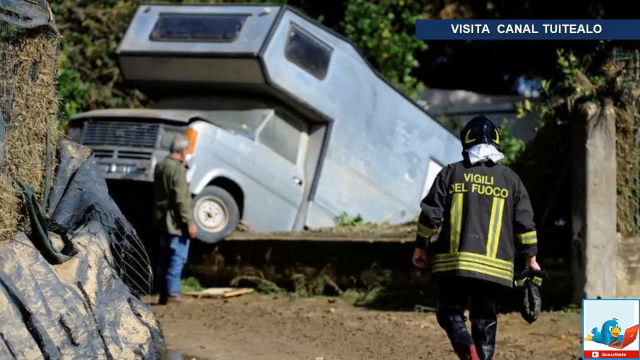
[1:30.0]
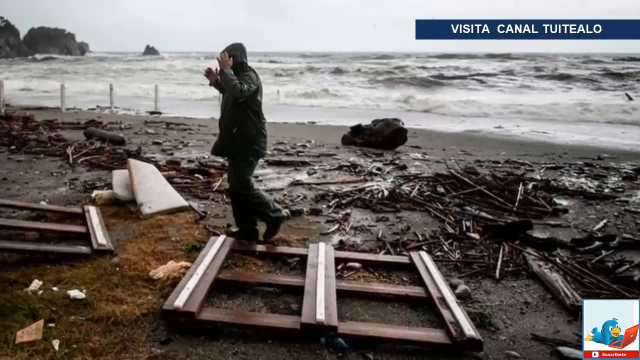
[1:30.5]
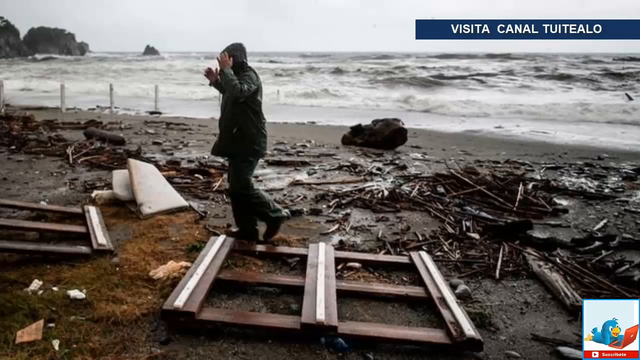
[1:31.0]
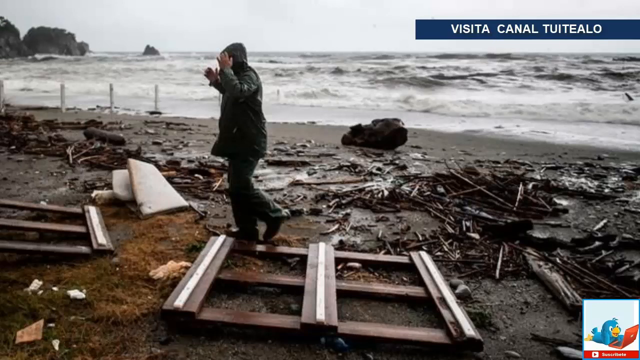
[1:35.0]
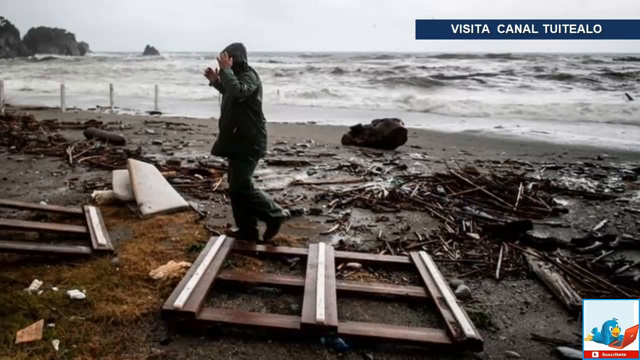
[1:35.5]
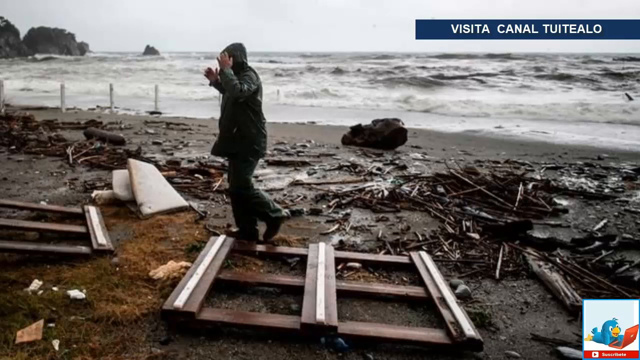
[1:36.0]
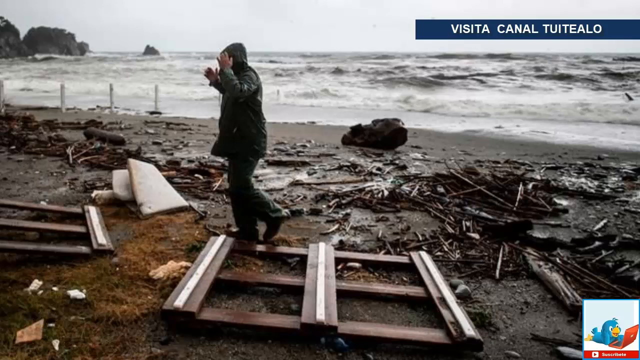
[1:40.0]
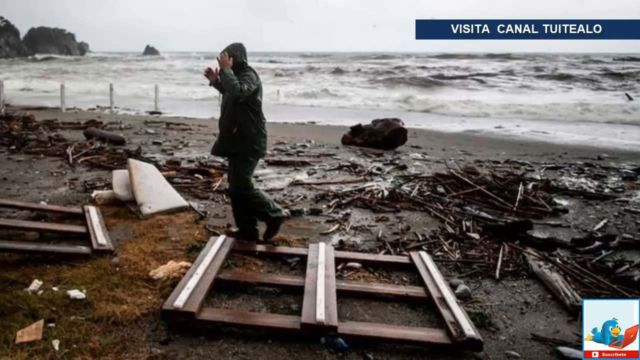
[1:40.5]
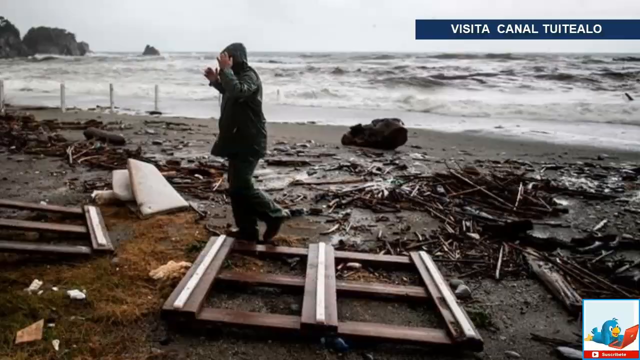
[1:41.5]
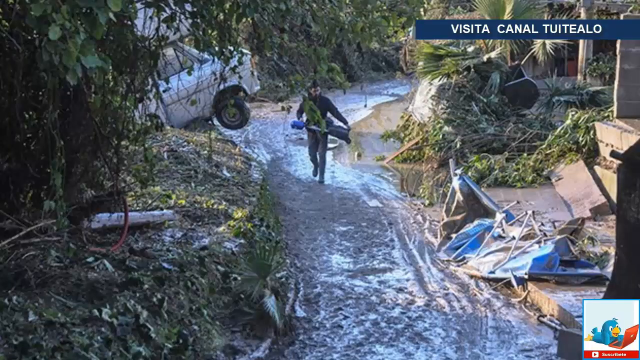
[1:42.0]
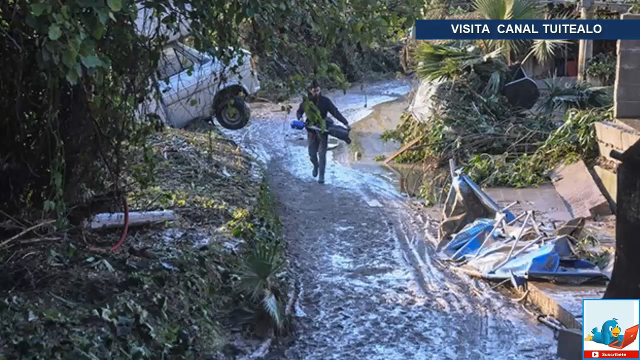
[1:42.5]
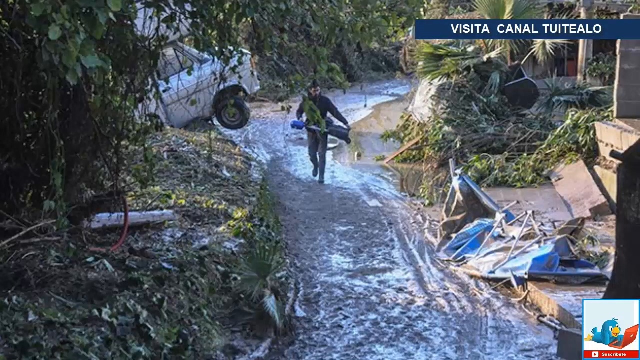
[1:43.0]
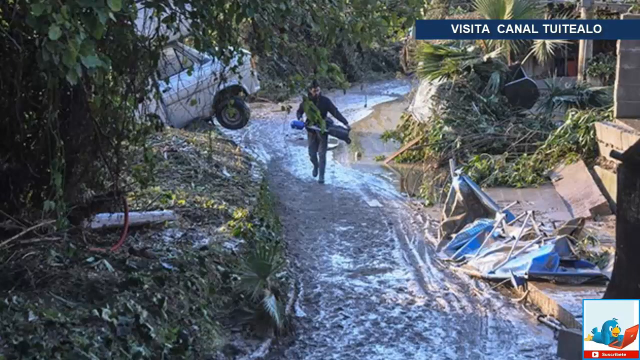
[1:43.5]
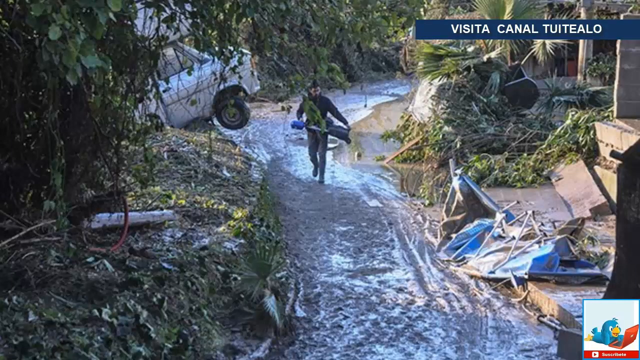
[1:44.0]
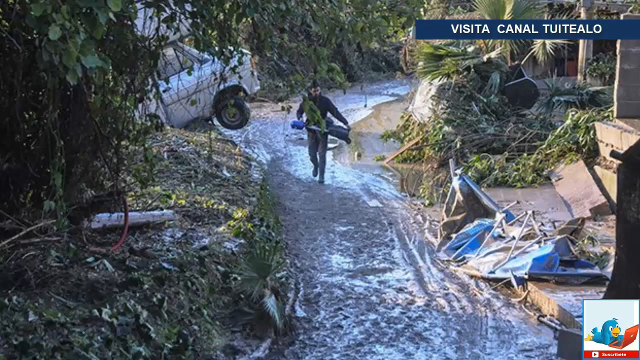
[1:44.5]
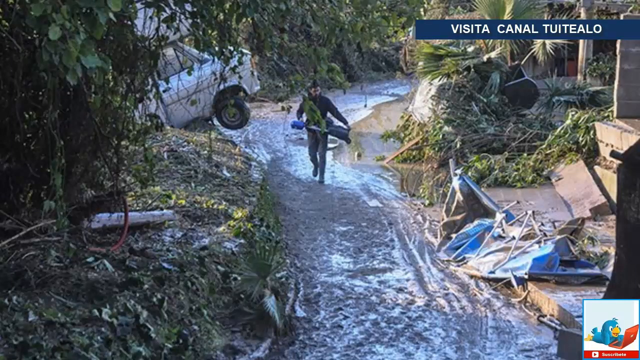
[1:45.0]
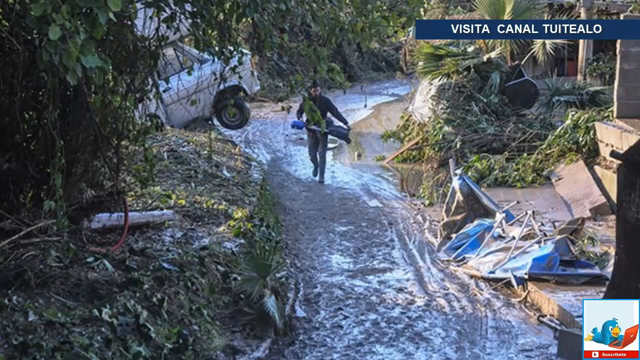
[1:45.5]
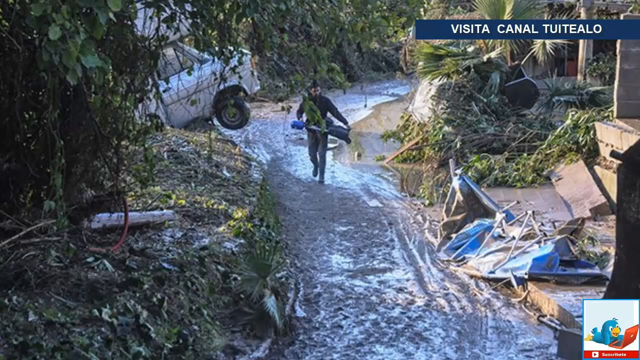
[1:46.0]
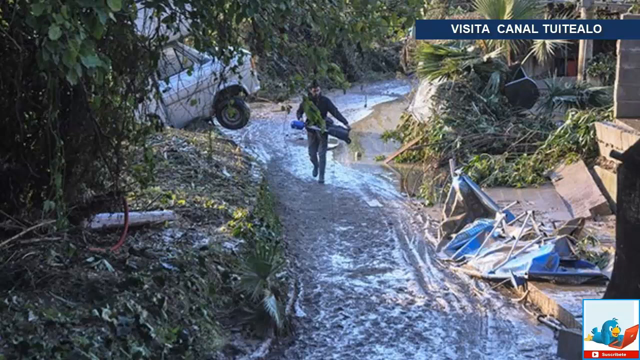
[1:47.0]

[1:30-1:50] An RV, or recreational vehicle, has been crashed by flooding. A man stands in front of it looking at it. The RV's front wheels are off the ground, and its rear end looks like it is possibly down in a ditch. A firefighter on the right side of the screen walks up to the scene. Next, rough seawater comes up onto the shore, and the buildings that were along the shore have been destroyed. A person walks through the debris on the beach next to the ocean water, surveying the damage. Then a person walks down a flooded street, with the RV in the background, its front wheels lifted off the ground. The person walks away from the crashed RV, which is over to the left, down a little alleyway or walkway. There is a lot of vegetation on either side of the walkway, and it looks damaged by the floodwaters. A blue tarp lies in the lower right.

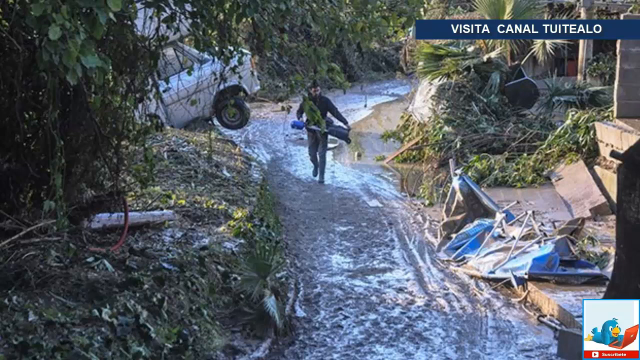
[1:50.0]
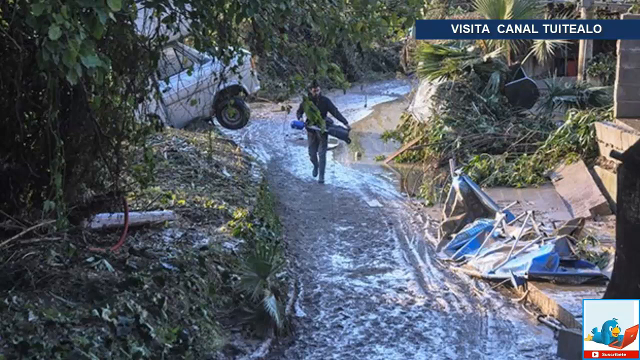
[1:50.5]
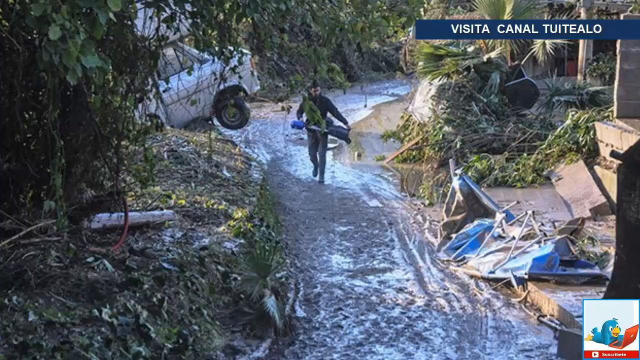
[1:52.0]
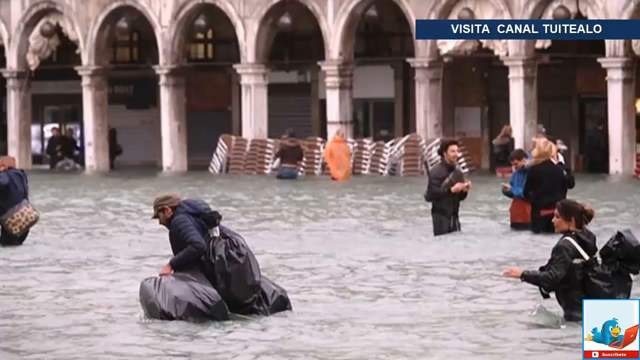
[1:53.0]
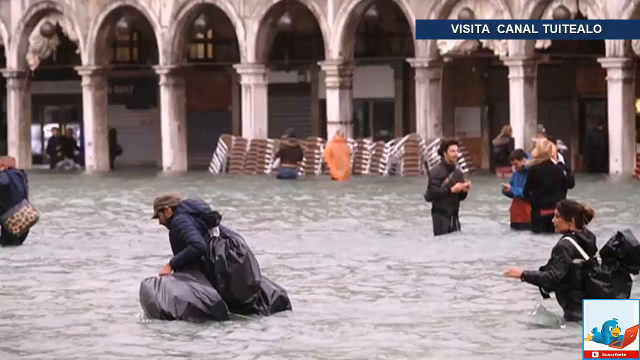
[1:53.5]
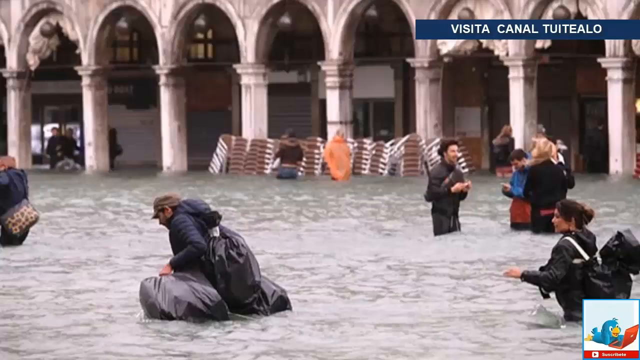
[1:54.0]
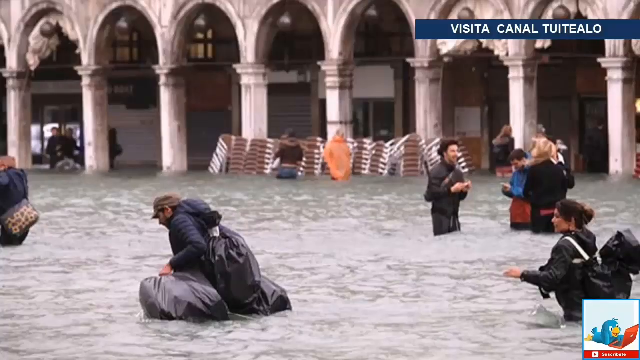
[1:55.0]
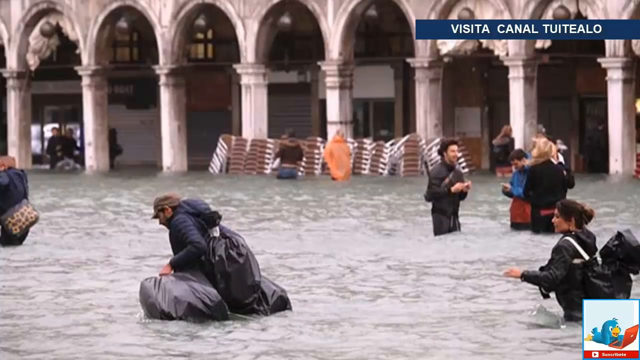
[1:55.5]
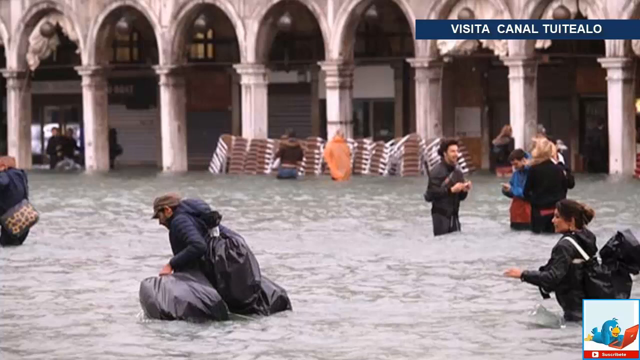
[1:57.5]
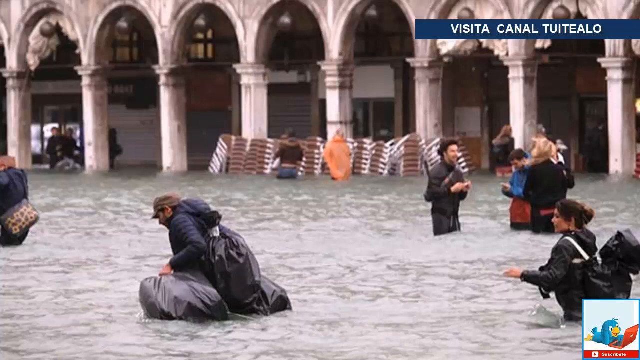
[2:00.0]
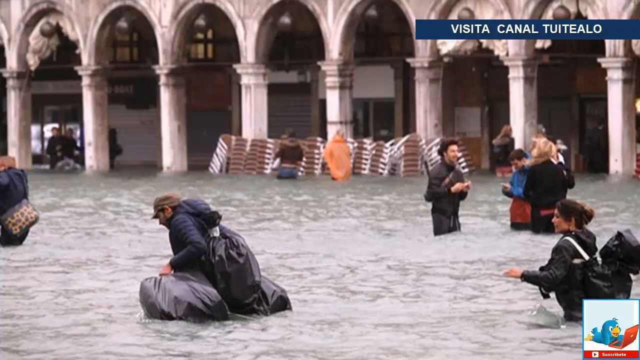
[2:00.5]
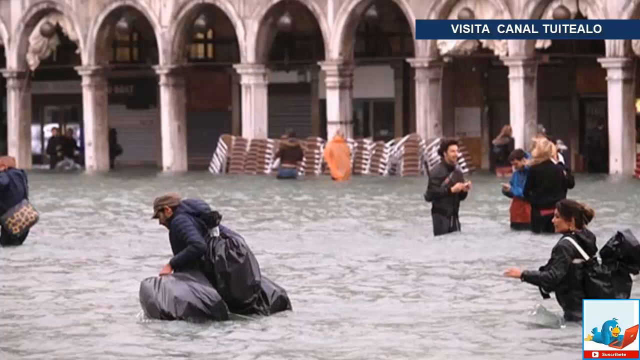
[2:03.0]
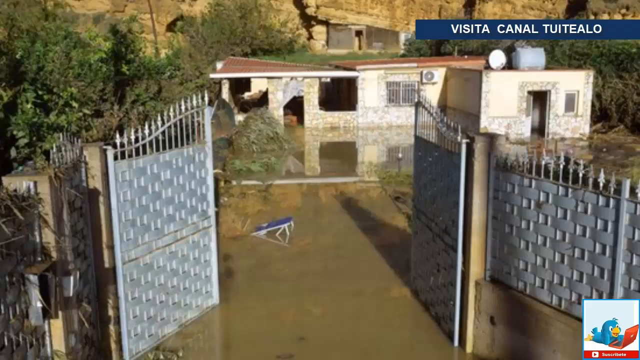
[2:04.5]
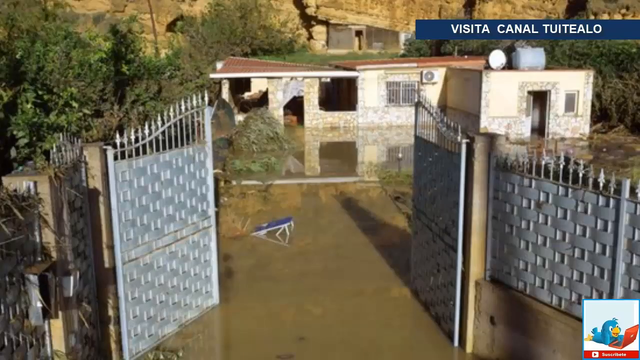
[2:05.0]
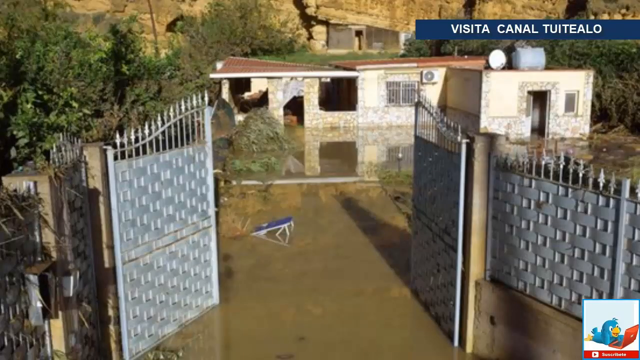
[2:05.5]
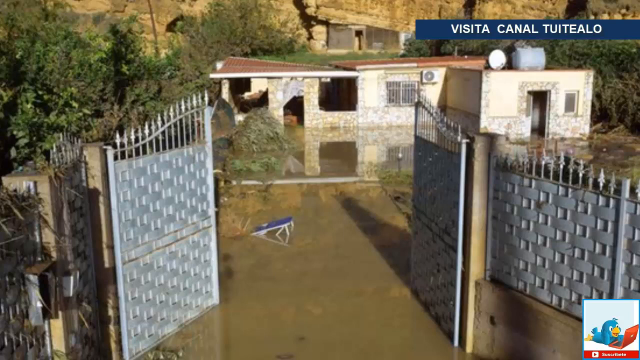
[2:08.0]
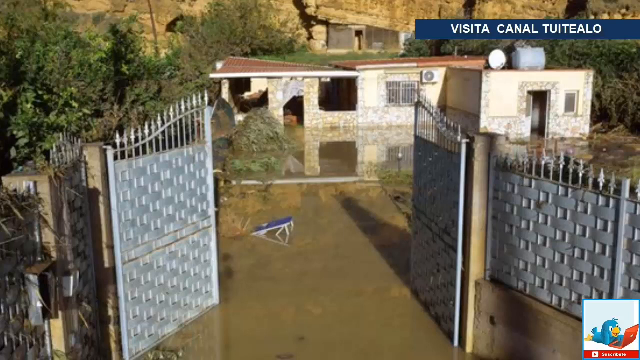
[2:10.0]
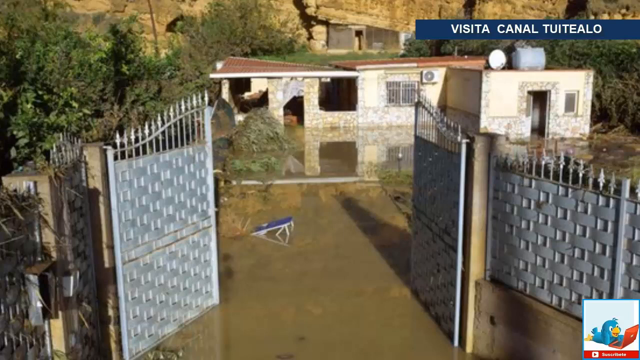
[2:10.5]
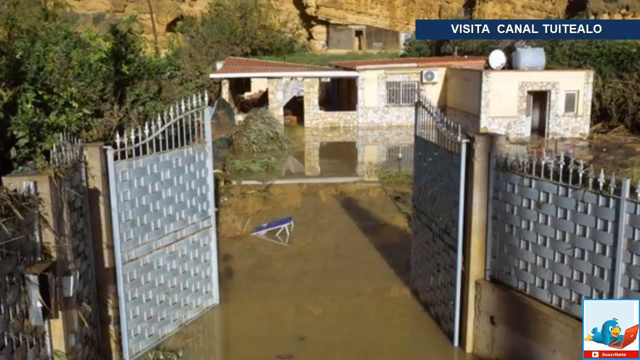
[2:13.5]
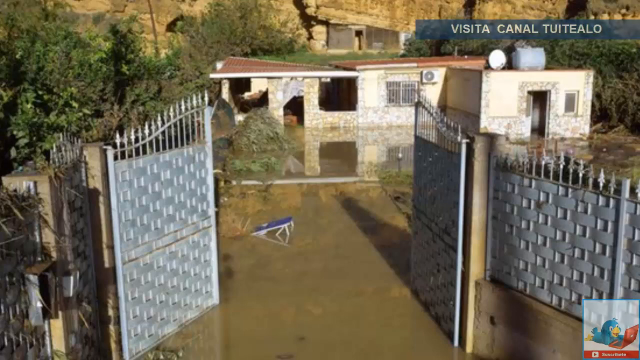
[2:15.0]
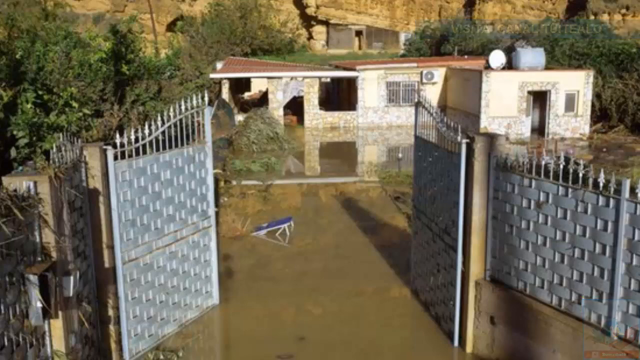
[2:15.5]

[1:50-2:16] The person continues walking down the flooded alleyway. In the distance behind him, a recreational vehicle is crashed at the side of the road, its front wheels off the ground. Heavy vegetation surrounds the pathway, and it is damaged by the flooding. Next, people walk through a city area carrying black trash bags with their belongings as they wade through floodwater; some walk one direction and some the other, and they are all almost waist deep in the water. In the distance behind them are the pillars of a building, with water flooded up the bottom part of the pillars. Then a flooded-out house is shown. Large gates to the front area of the home are open, and there is standing water all through the area. The home in the background looks like it has taken heavy damage.